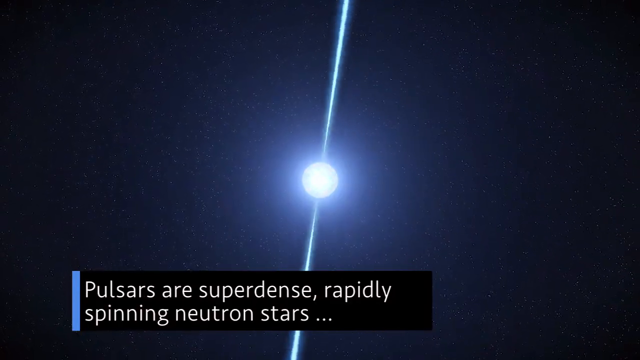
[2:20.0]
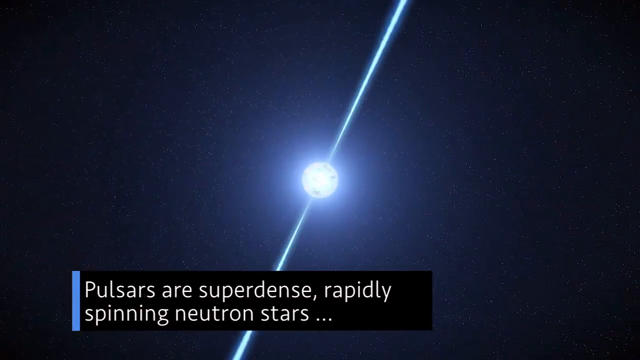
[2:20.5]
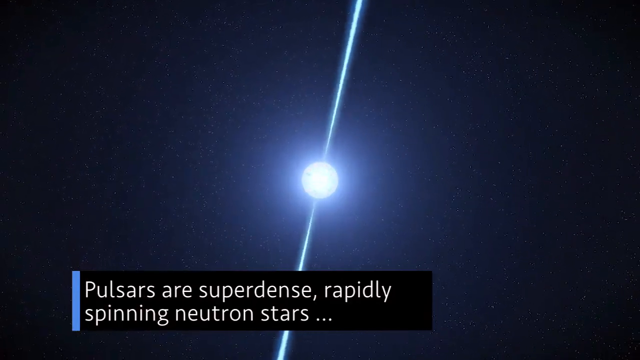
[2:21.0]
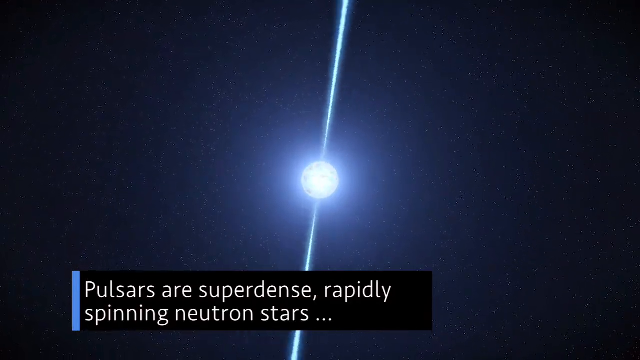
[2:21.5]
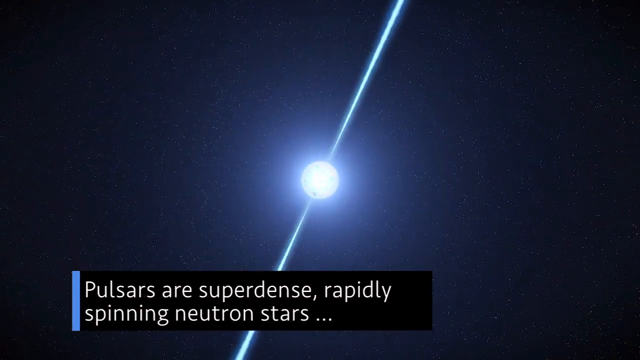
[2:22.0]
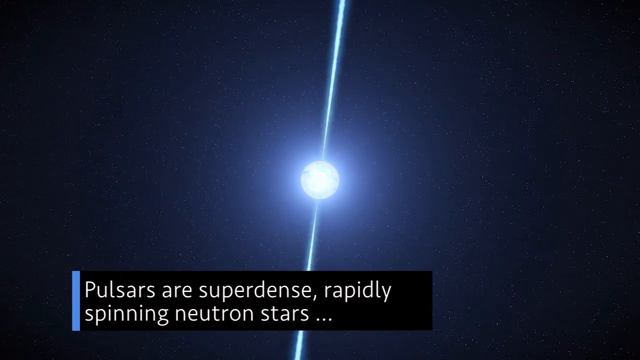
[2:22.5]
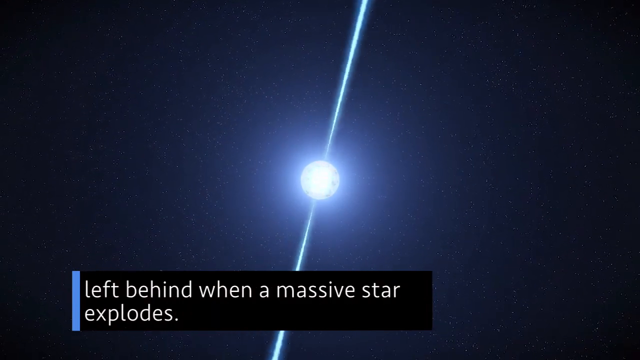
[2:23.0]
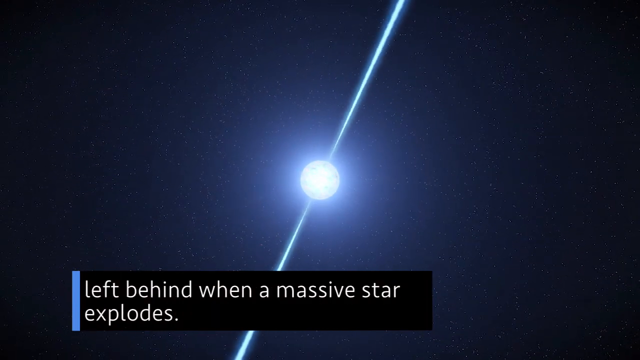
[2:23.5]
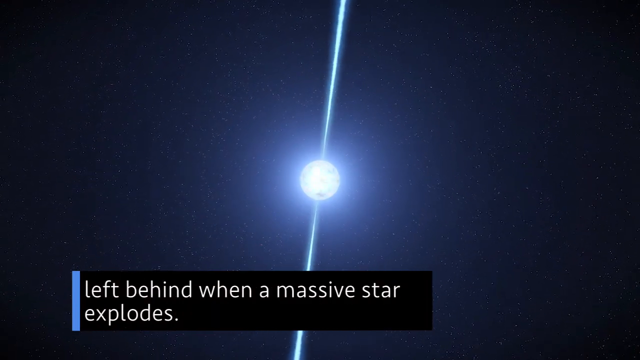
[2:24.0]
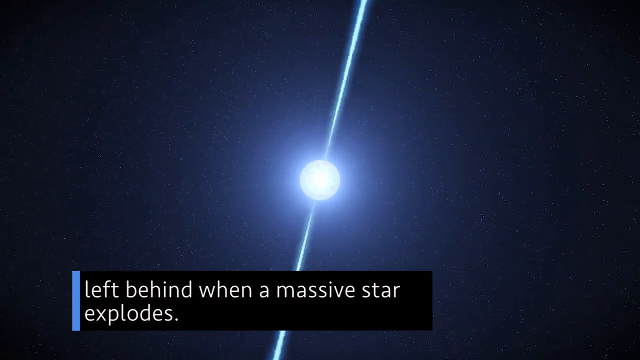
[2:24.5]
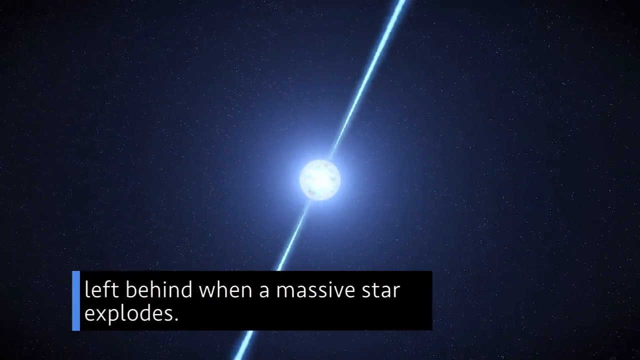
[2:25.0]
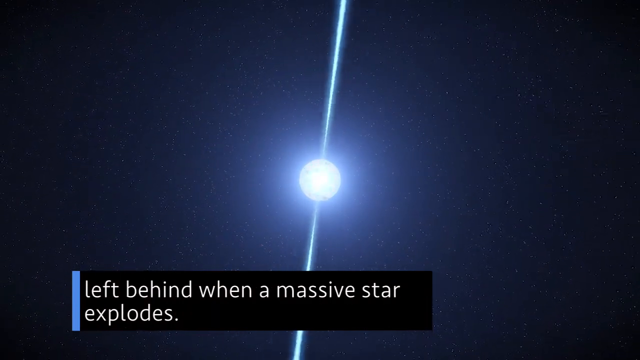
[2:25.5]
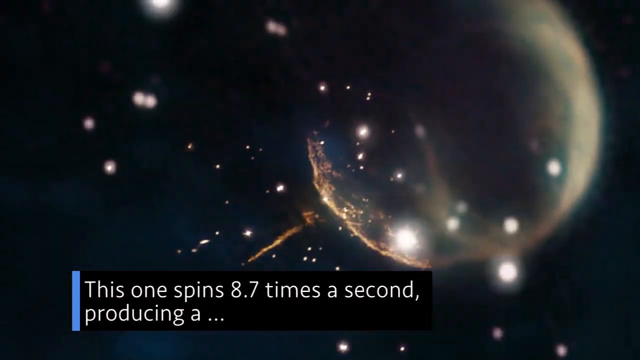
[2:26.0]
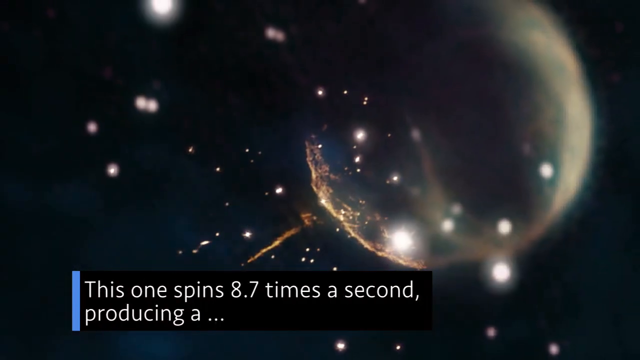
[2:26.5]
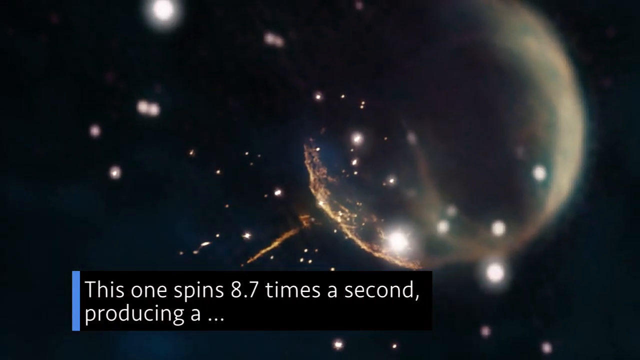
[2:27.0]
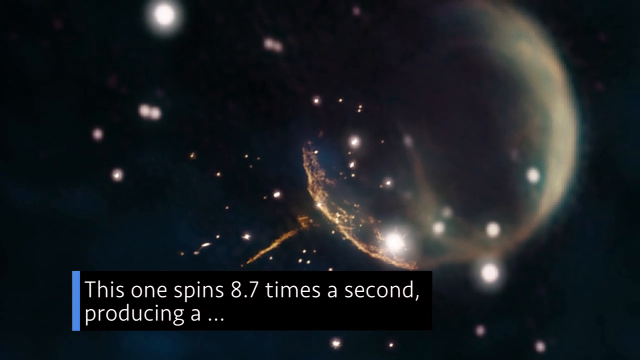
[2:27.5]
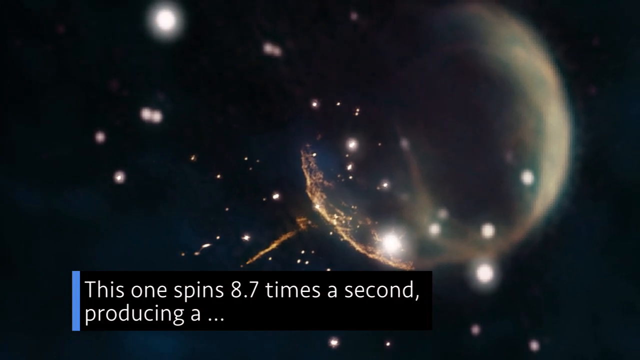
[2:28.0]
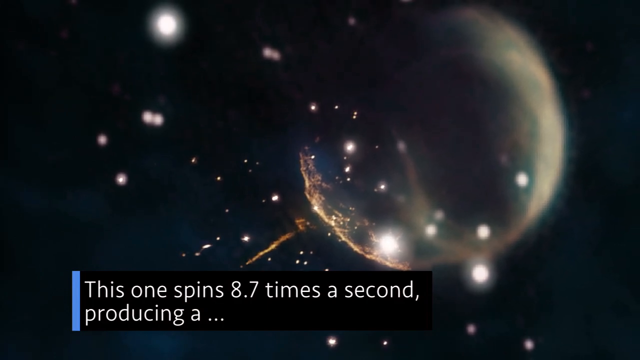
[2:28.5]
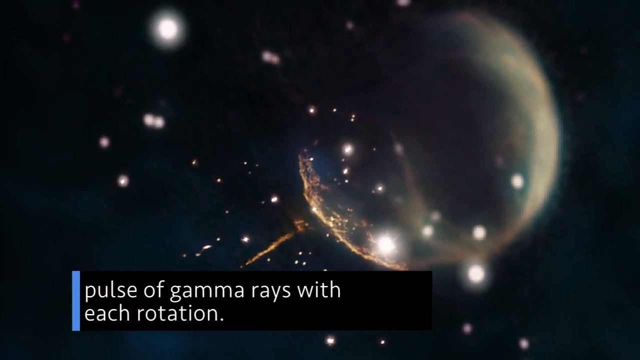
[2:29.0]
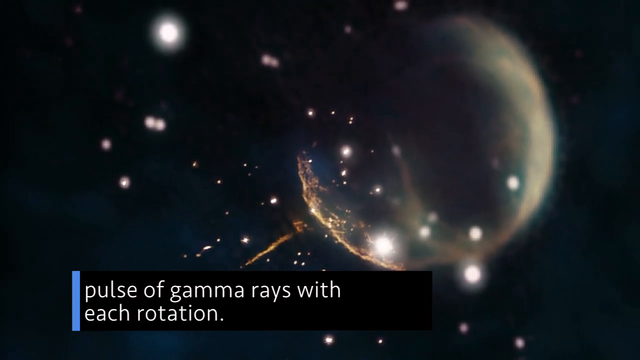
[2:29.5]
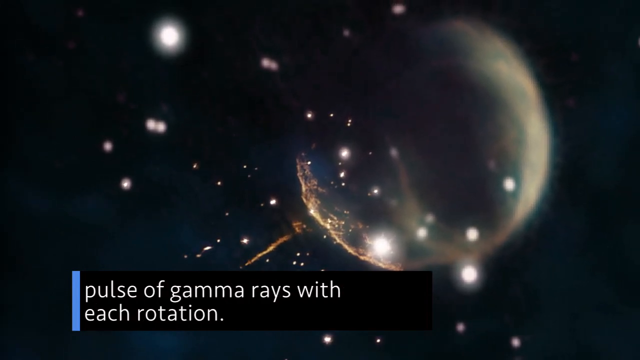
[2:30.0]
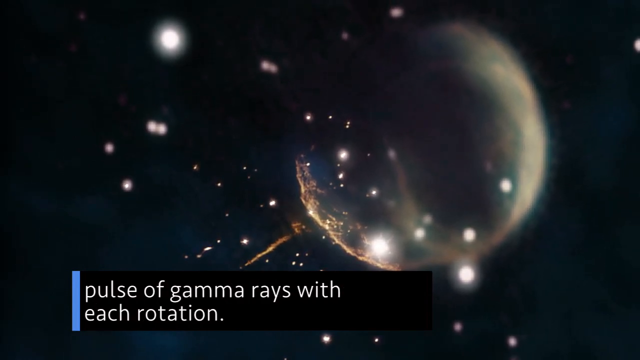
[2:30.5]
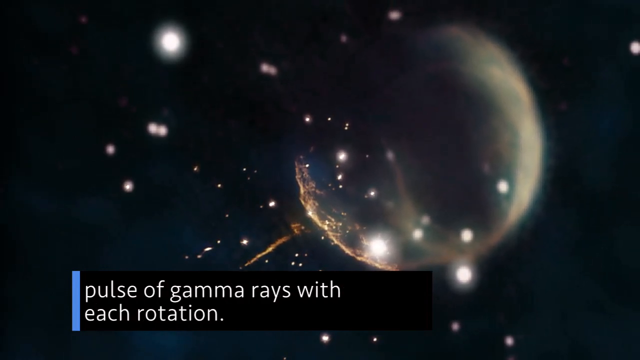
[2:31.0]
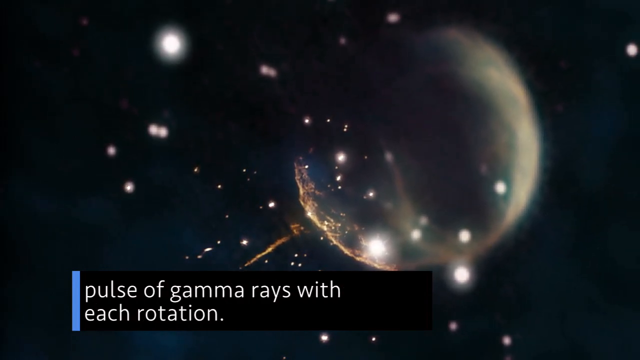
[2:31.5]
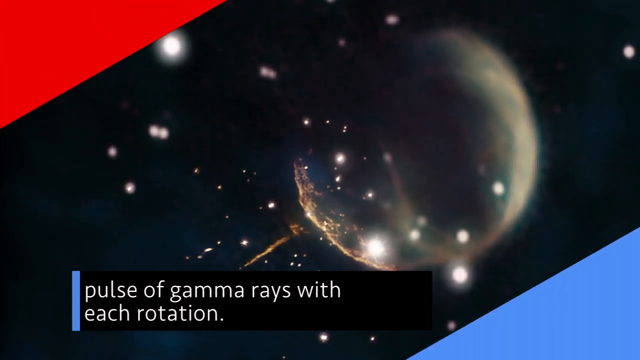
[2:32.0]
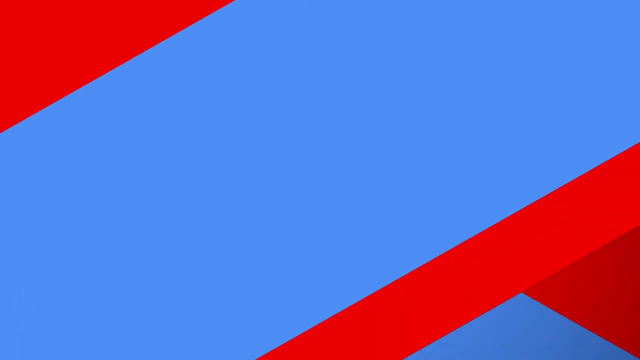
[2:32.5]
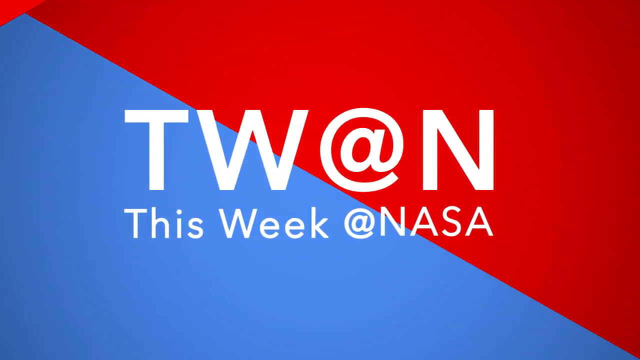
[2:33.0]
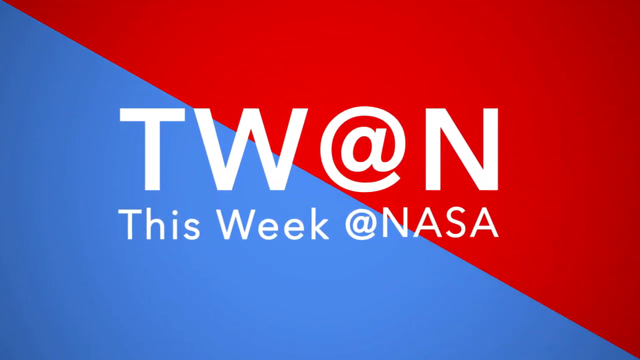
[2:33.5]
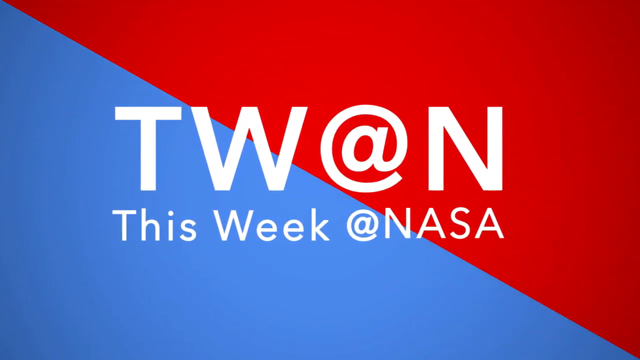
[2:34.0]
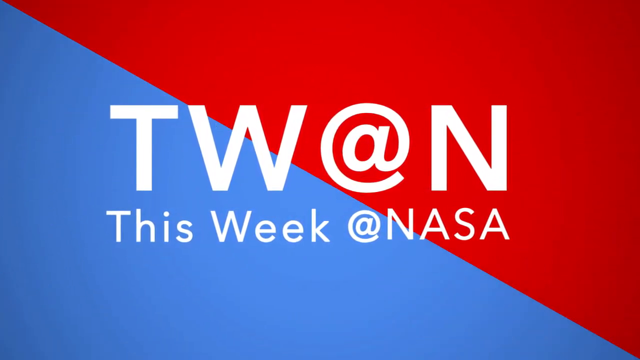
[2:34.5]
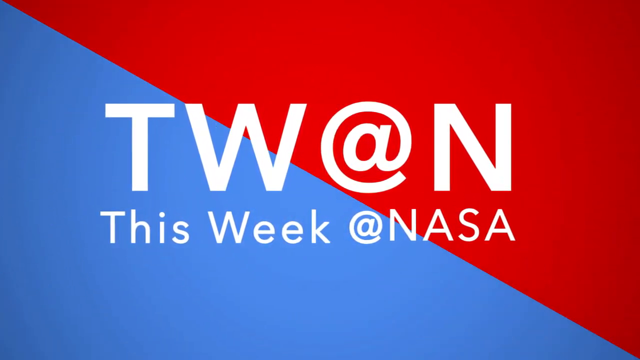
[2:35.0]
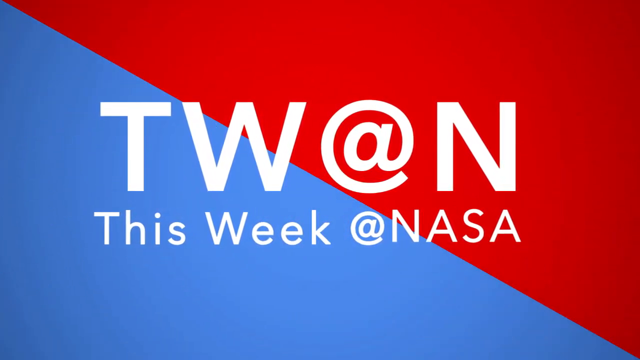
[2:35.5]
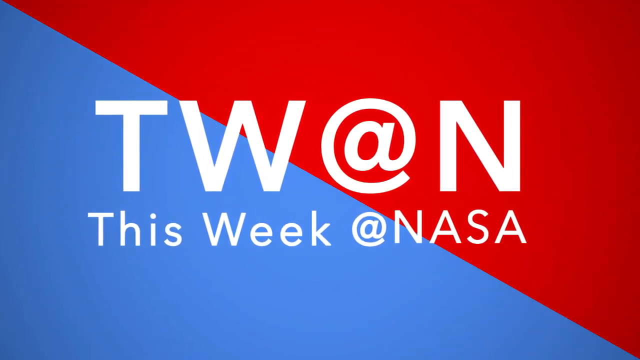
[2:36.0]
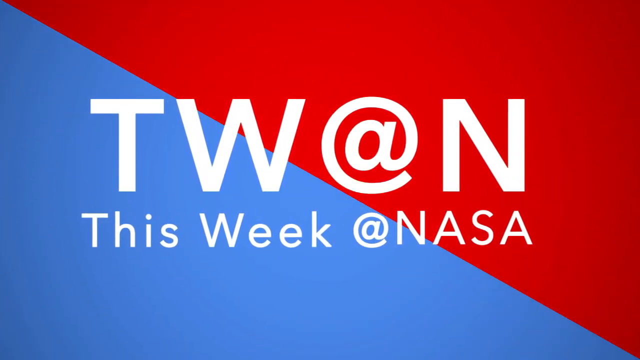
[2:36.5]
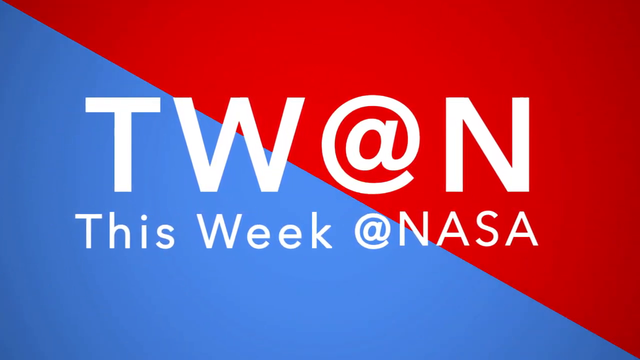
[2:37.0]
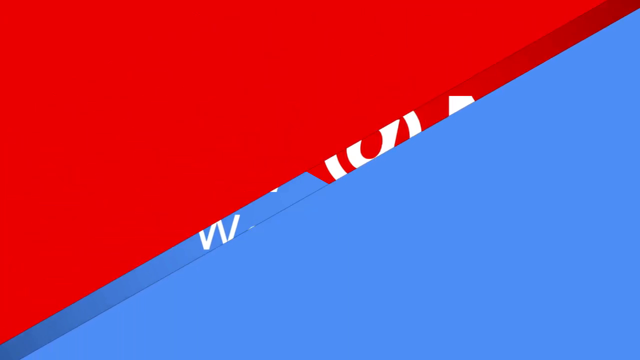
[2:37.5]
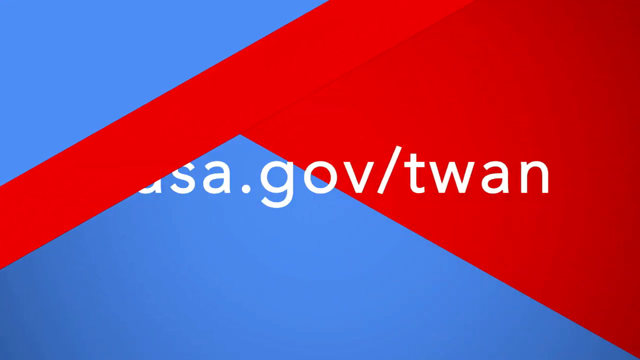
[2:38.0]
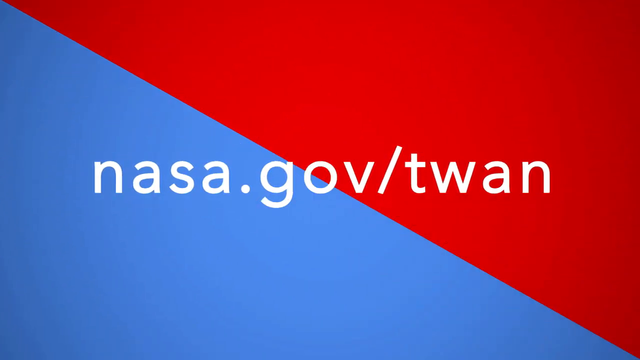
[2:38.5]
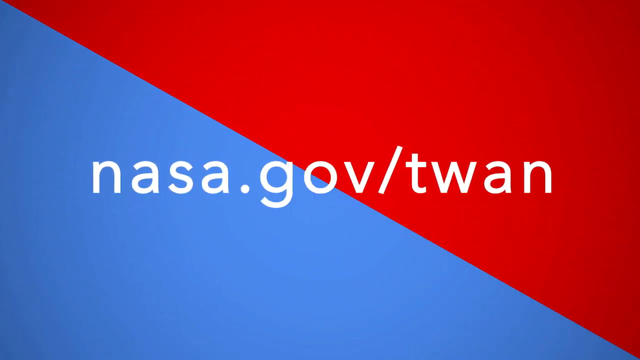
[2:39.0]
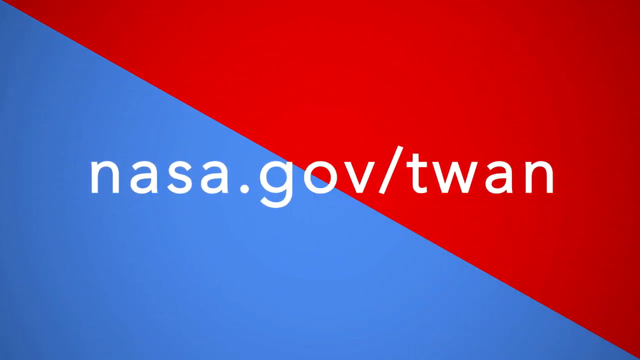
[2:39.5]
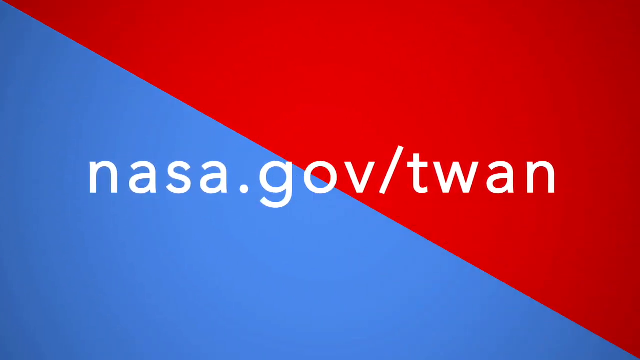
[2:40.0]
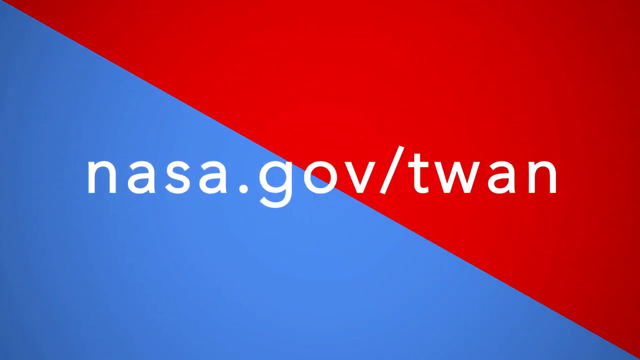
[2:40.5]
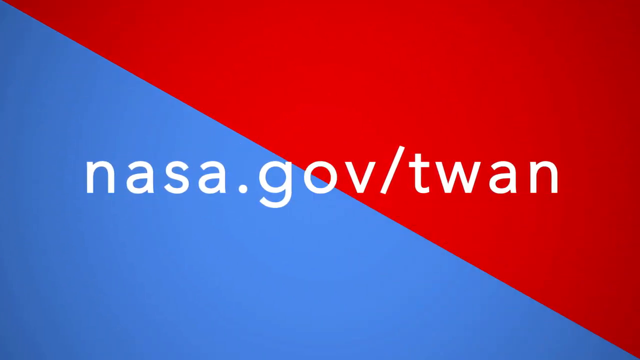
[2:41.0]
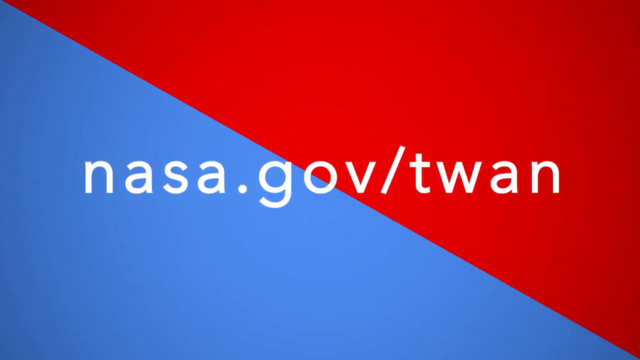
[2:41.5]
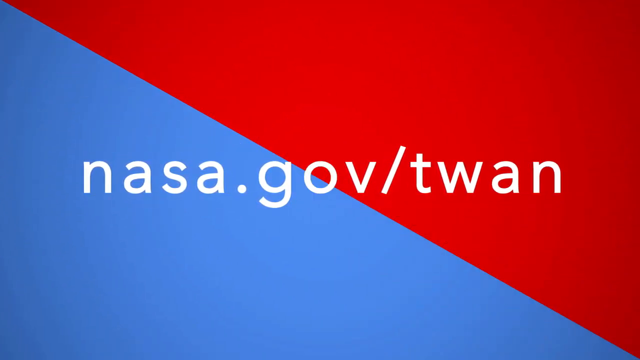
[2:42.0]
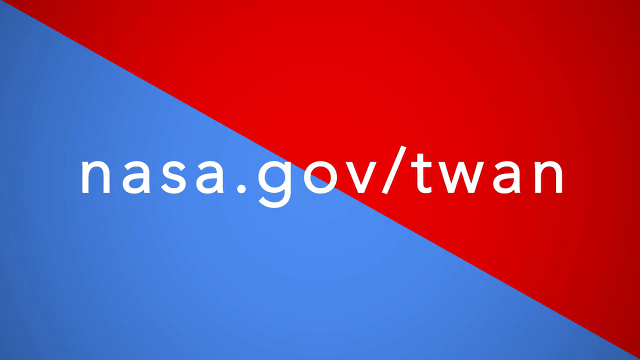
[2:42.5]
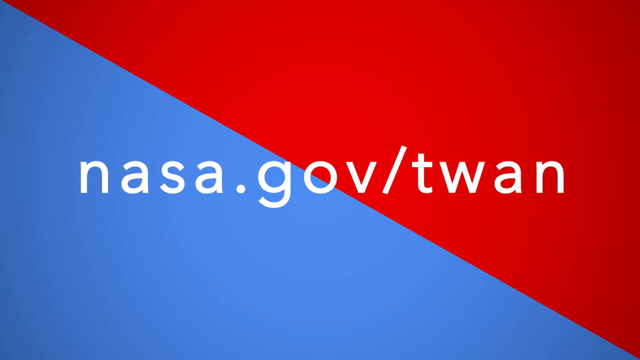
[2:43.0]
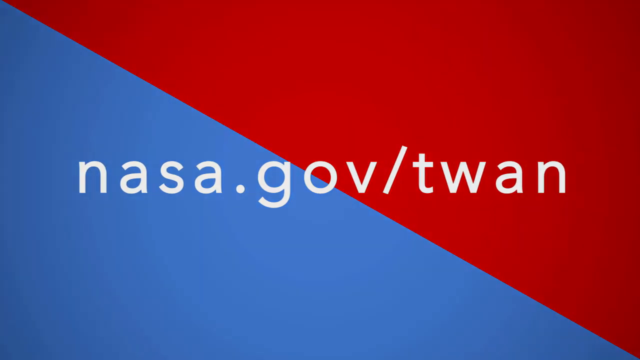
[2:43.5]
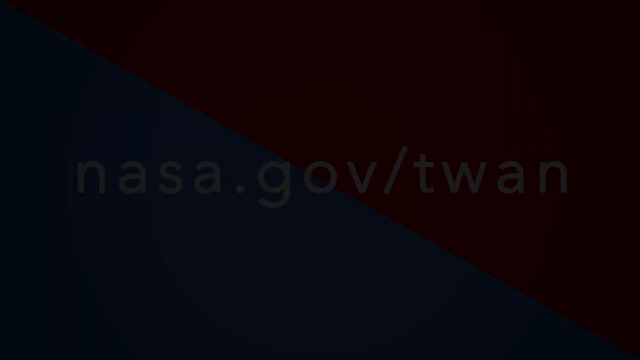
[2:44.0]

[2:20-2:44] A pulsar is shown, described as a super dense and rapidly spinning neutron star. Text says that when a massive star explodes, the resulting stars spin fast; this one spins 8.7 times a second and produces a pulse of gamma rays with each rotation. The channel is called This Week at NASA.